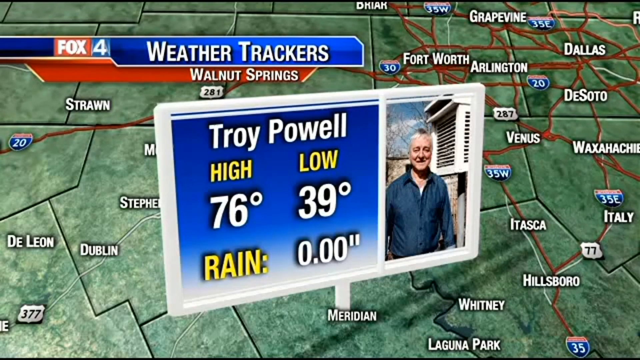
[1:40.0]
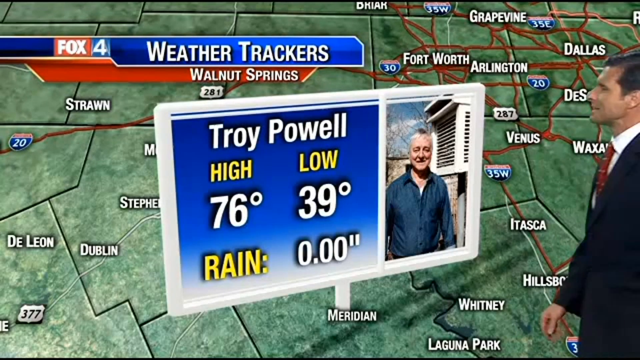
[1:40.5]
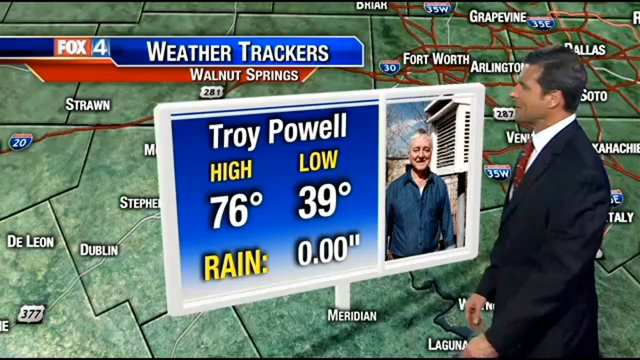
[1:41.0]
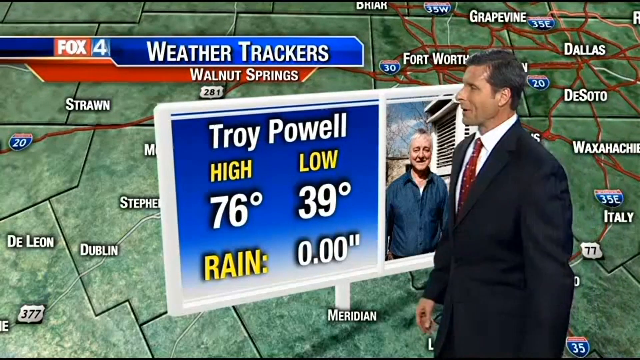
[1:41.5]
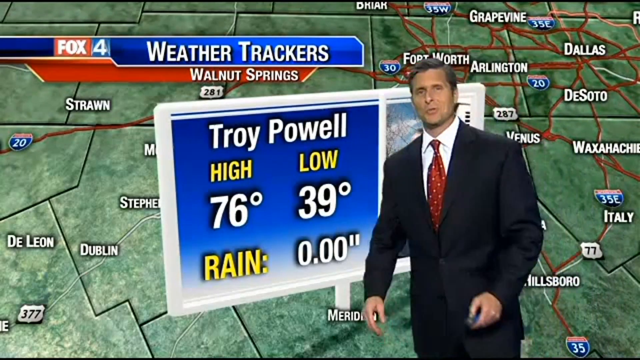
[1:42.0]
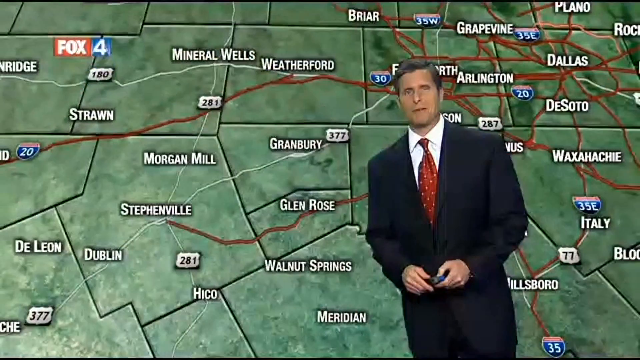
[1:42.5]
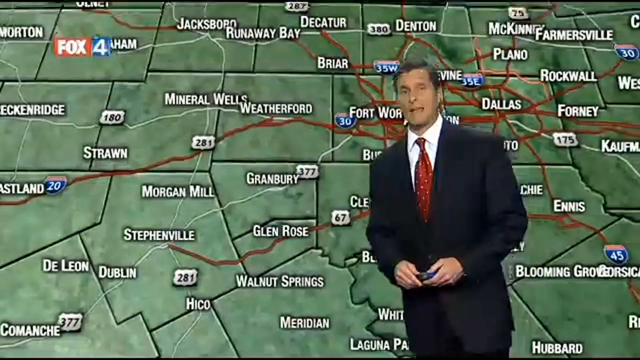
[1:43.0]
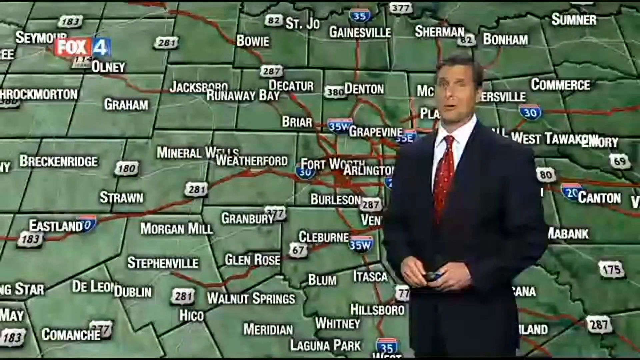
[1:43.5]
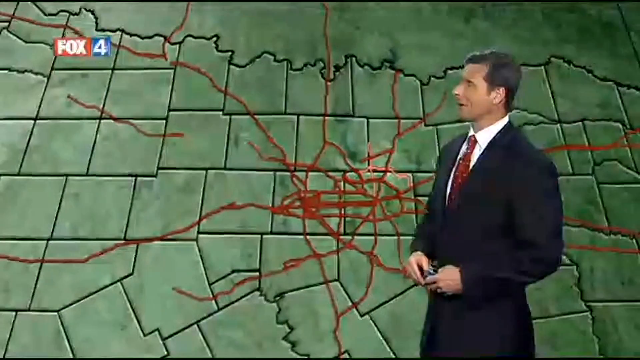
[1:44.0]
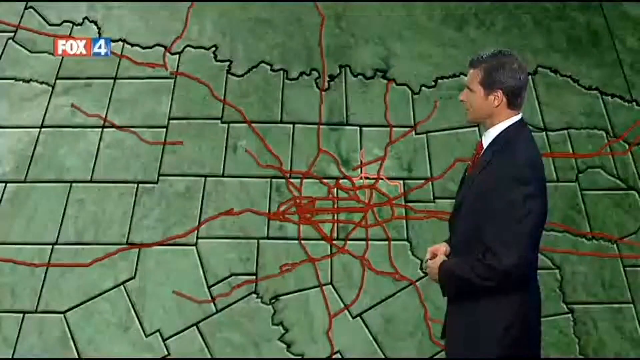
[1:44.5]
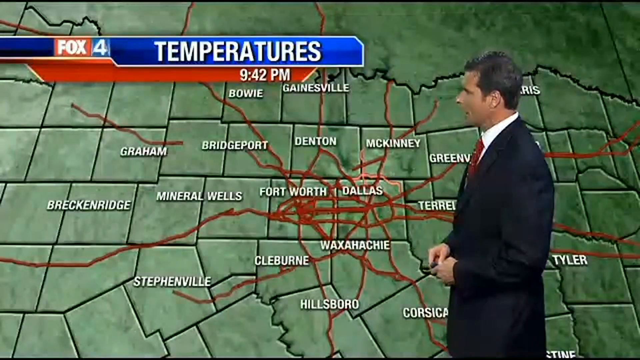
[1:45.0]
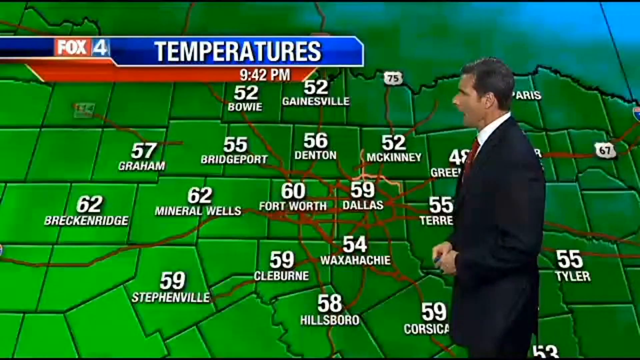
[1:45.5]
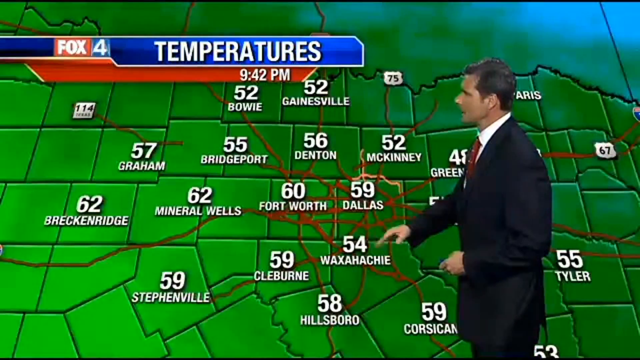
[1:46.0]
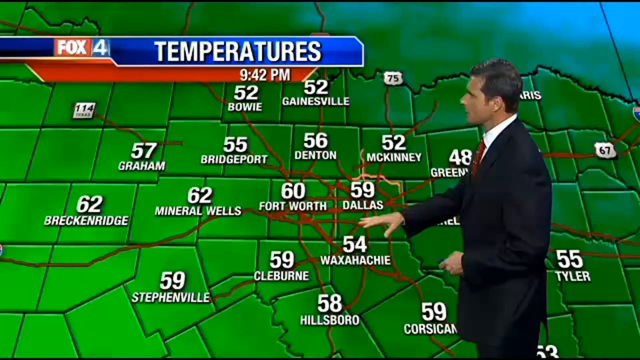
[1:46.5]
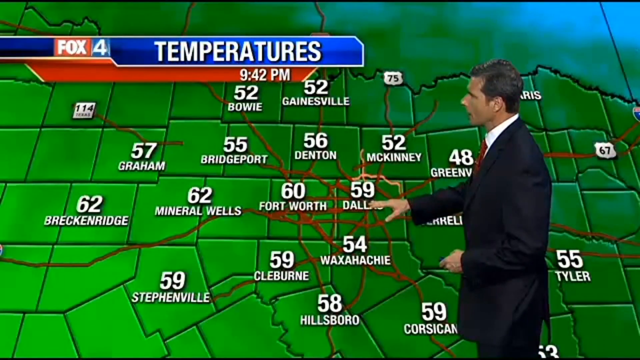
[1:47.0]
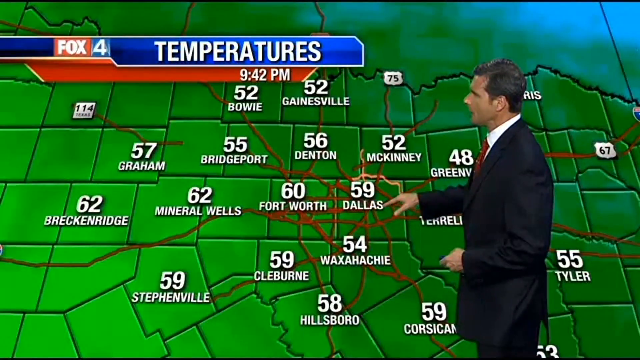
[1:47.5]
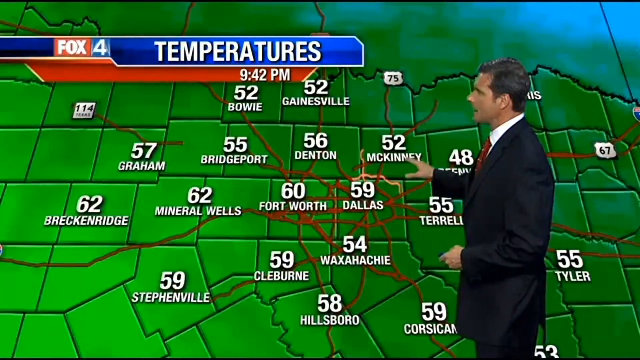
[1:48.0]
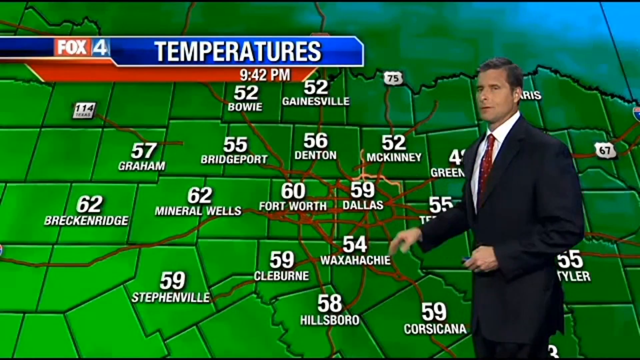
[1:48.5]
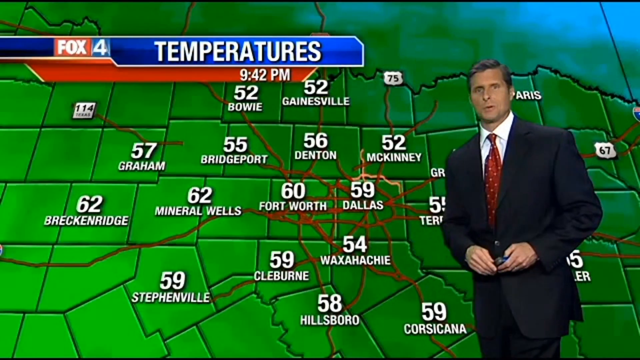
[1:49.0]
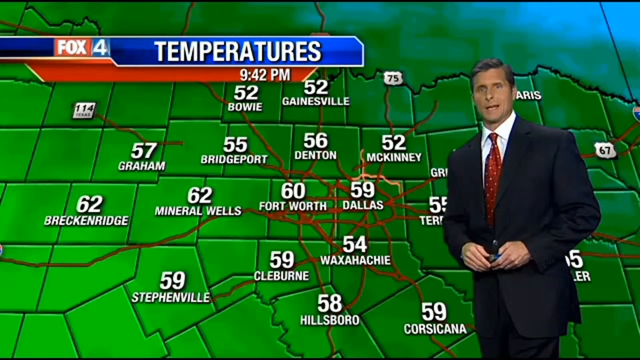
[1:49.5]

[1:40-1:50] A weatherman walks from the right side of the screen to almost the center. Behind him, an image reads "weather trekkers" in white text and "Walnut Springs", along with a computer-generated image of a sign bearing the picture of a man wearing a blue shirt. The person's name on the left side reads "Troy Powell", followed by the high and low temperatures, 76 and 39, then "rain" with zero inches next to it. That image goes away and a green map appears behind the weatherman, with many red lines going in various directions but mostly centered in the middle, and the state borders in black lines. Temperatures of different cities in the heartland of the United States are then shown.